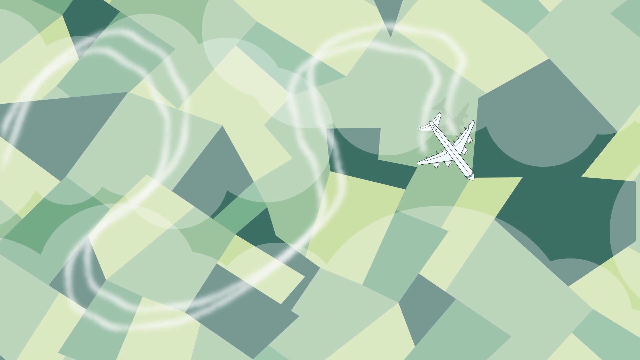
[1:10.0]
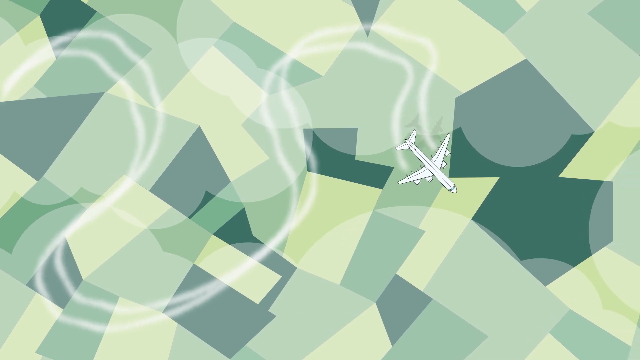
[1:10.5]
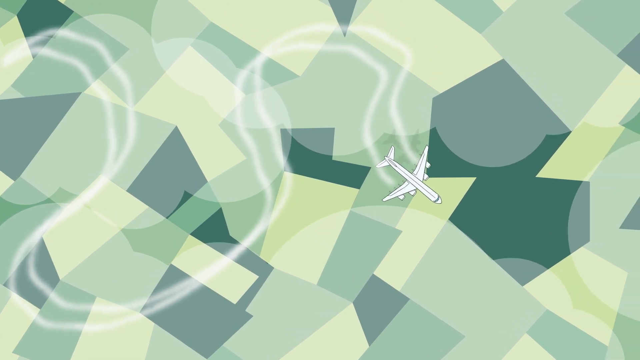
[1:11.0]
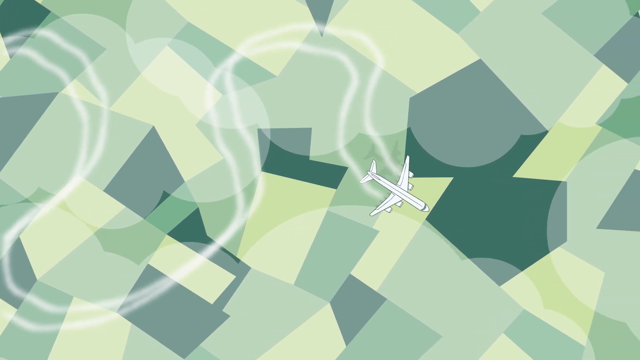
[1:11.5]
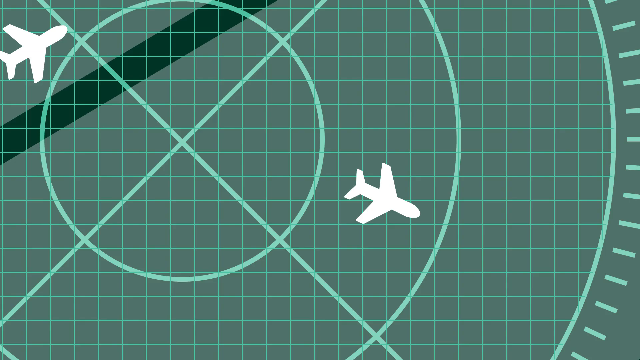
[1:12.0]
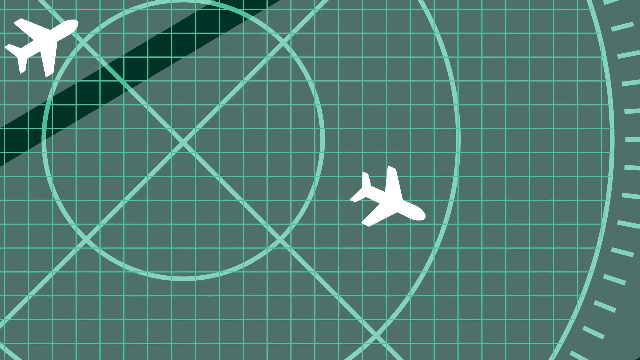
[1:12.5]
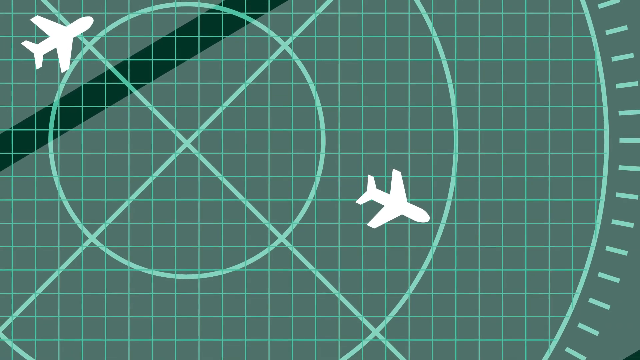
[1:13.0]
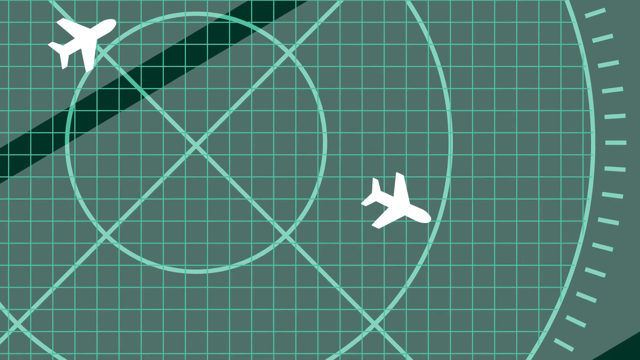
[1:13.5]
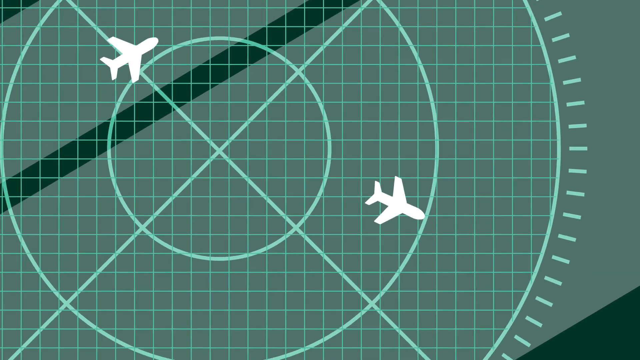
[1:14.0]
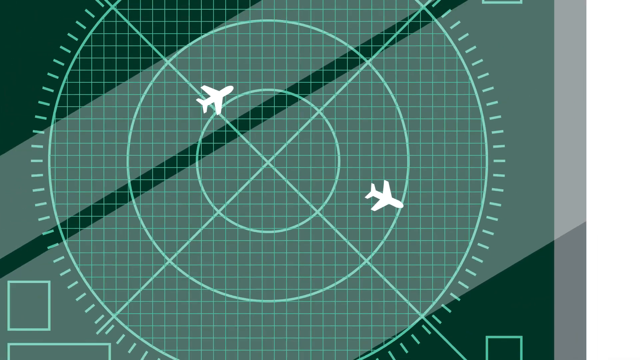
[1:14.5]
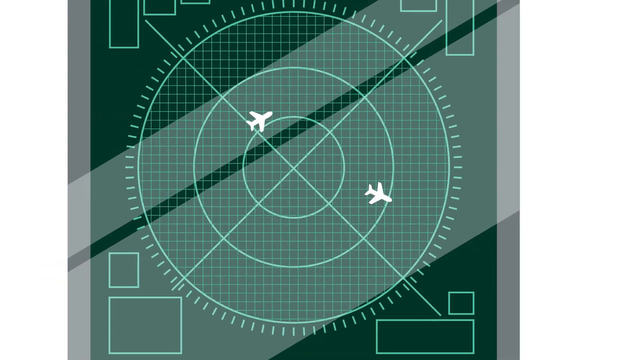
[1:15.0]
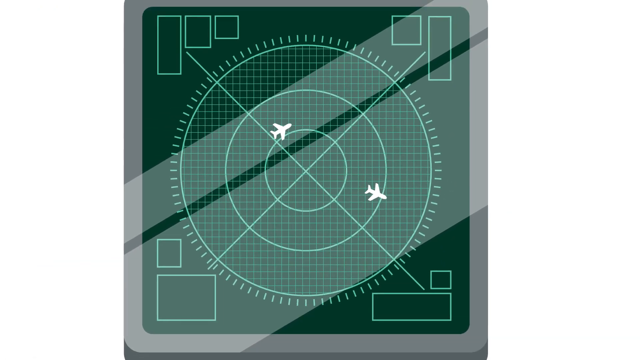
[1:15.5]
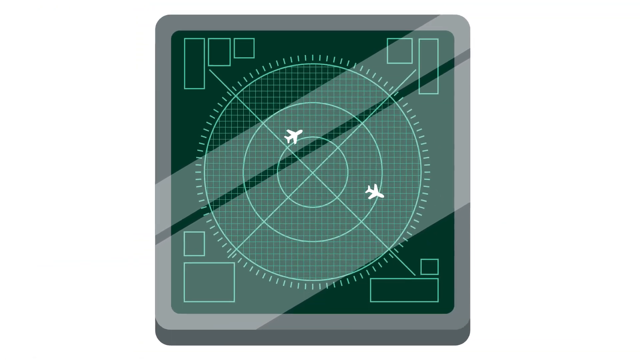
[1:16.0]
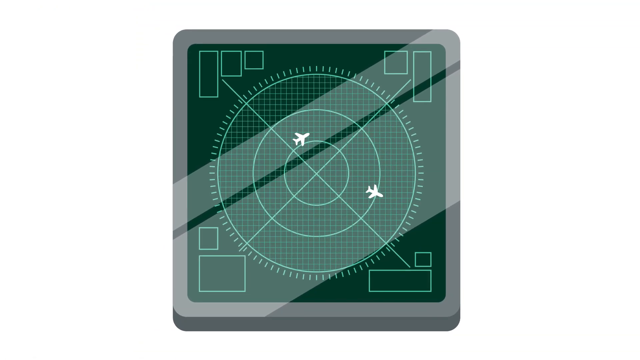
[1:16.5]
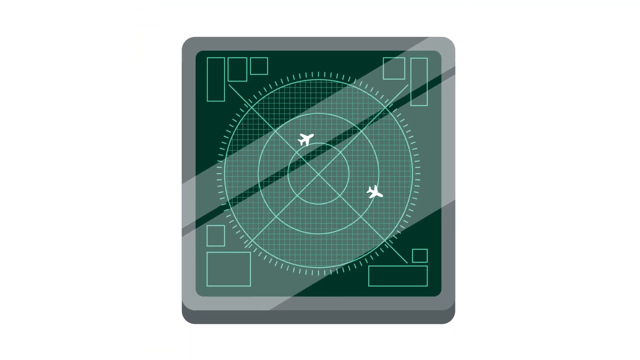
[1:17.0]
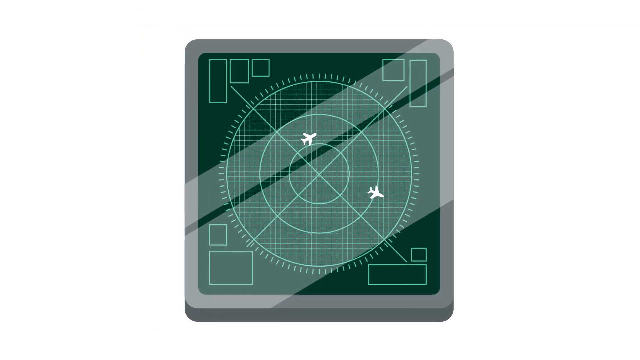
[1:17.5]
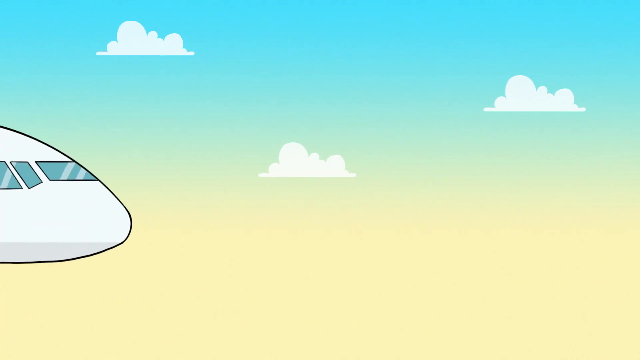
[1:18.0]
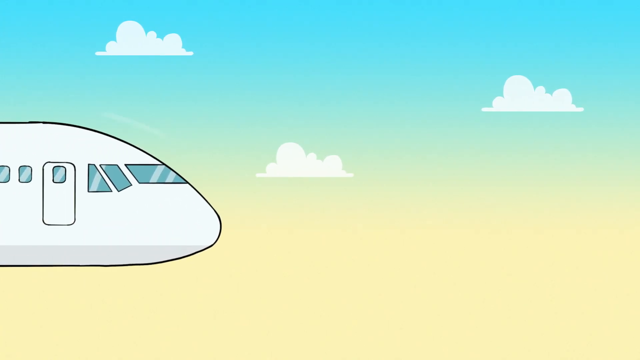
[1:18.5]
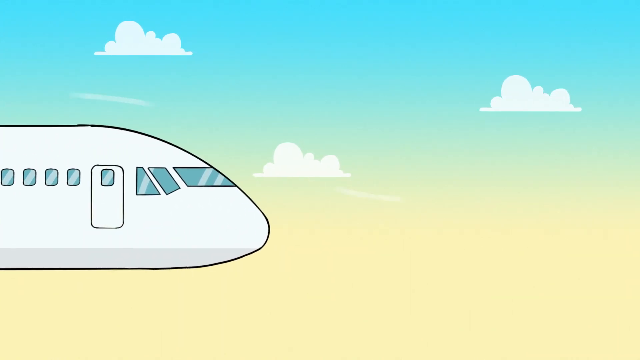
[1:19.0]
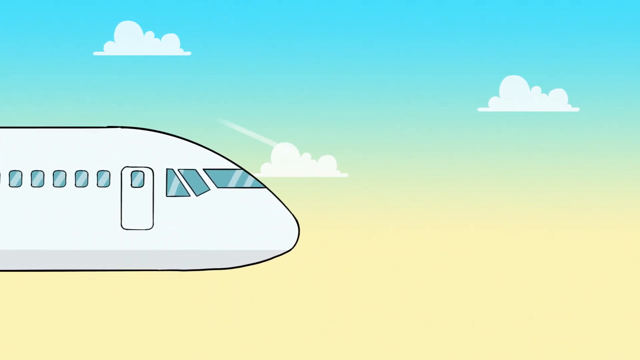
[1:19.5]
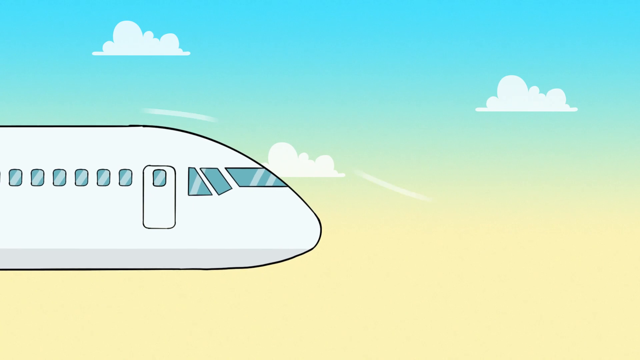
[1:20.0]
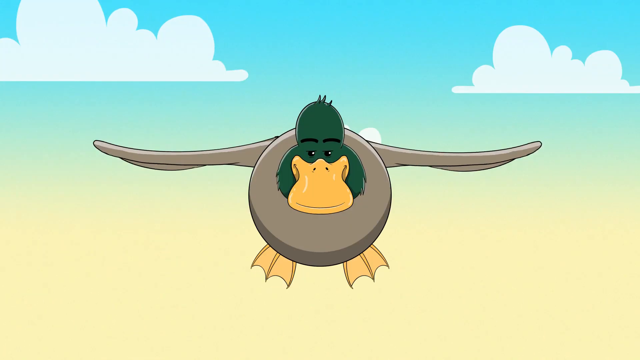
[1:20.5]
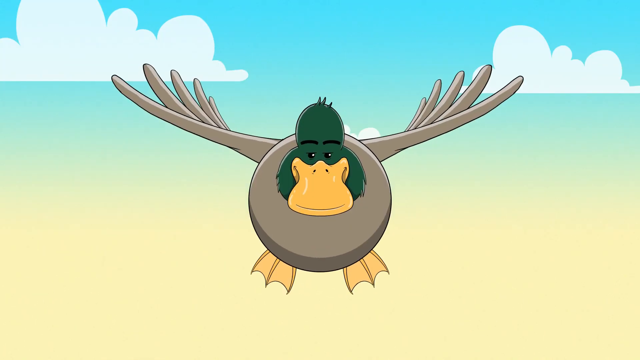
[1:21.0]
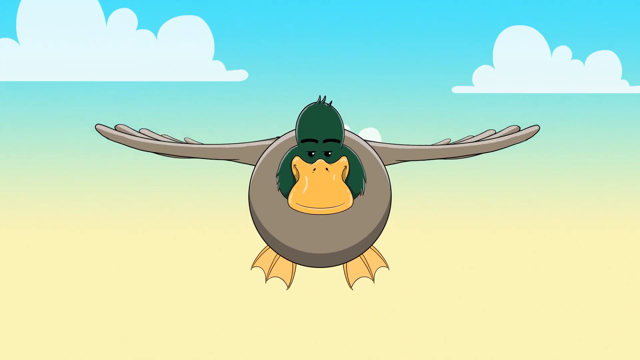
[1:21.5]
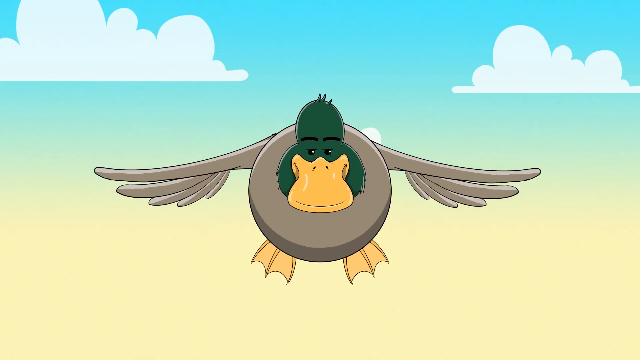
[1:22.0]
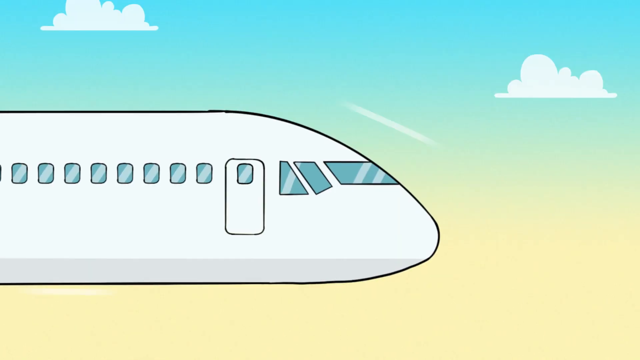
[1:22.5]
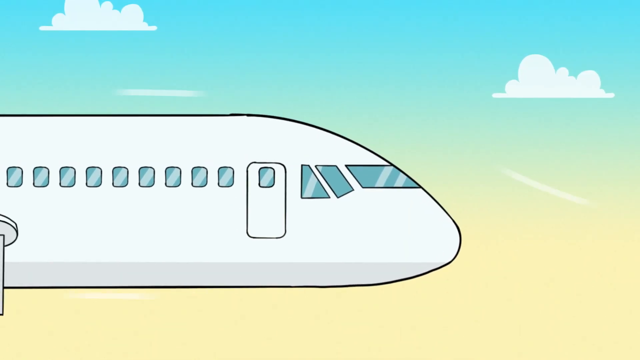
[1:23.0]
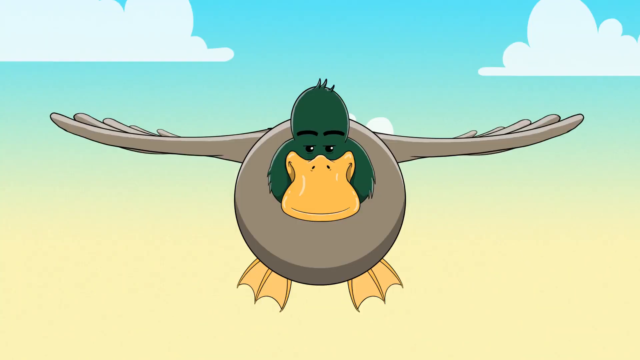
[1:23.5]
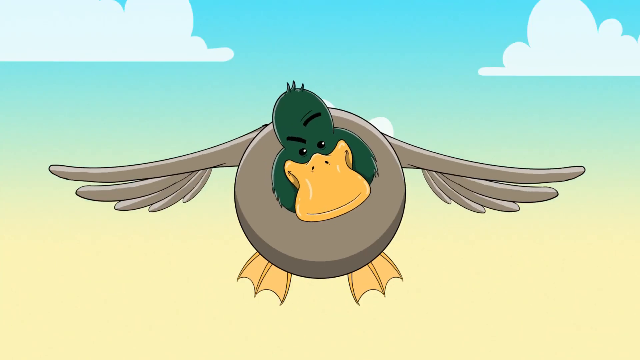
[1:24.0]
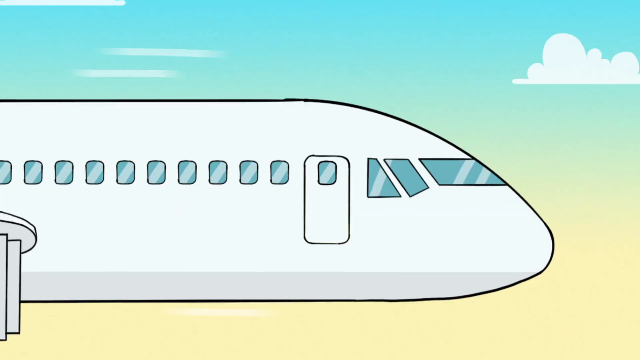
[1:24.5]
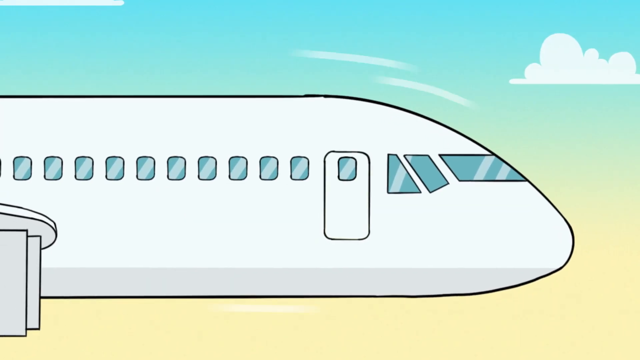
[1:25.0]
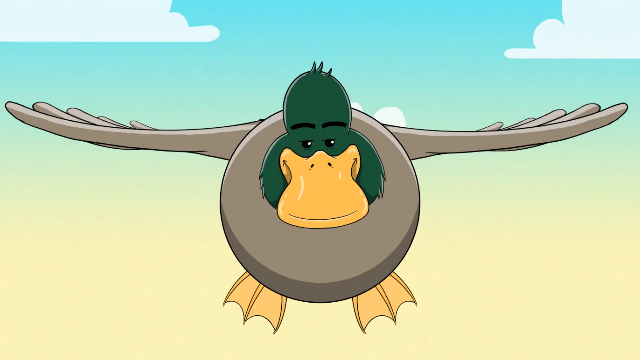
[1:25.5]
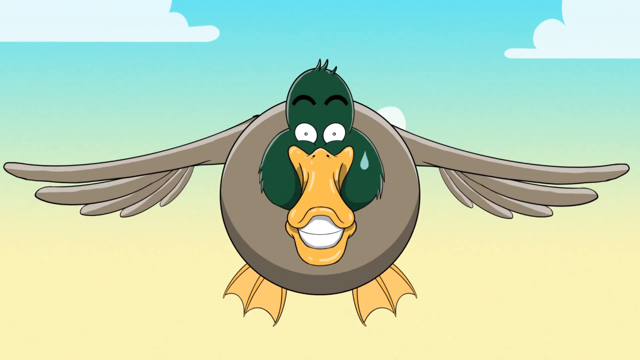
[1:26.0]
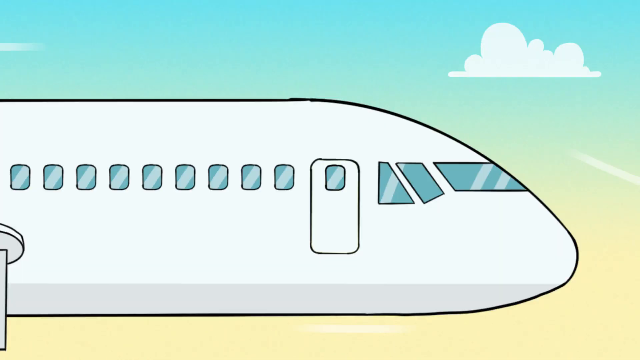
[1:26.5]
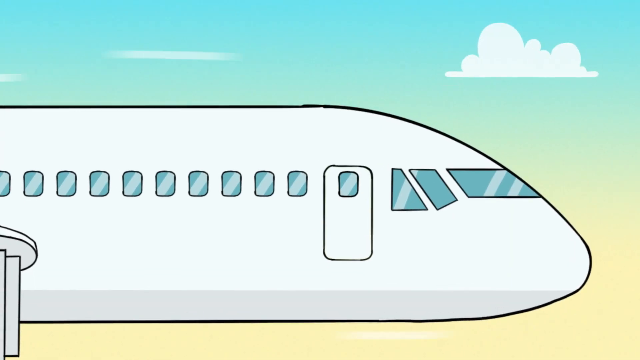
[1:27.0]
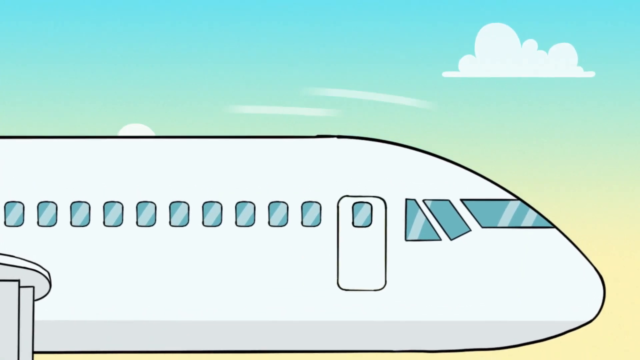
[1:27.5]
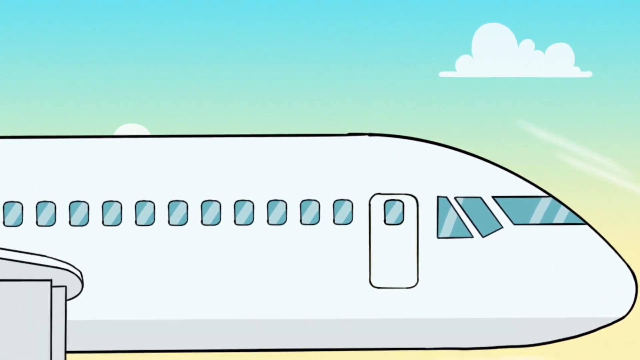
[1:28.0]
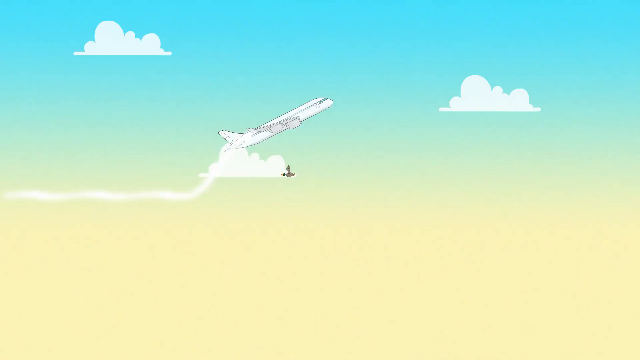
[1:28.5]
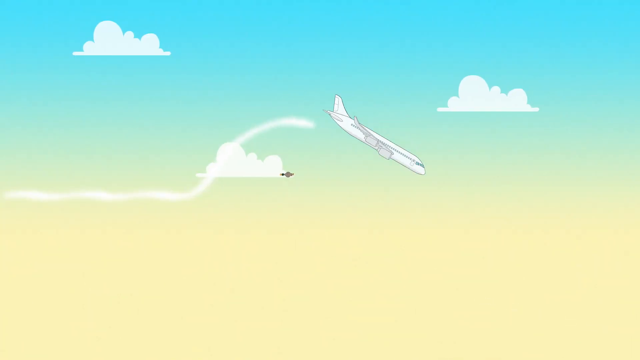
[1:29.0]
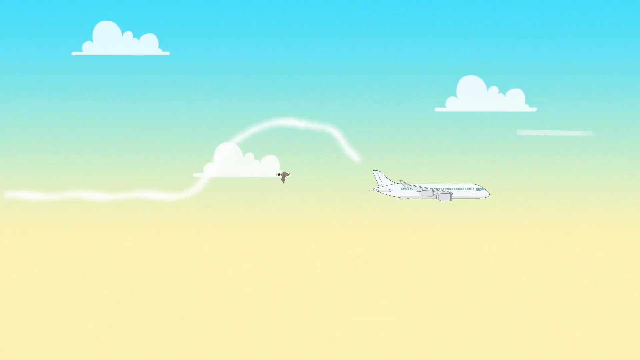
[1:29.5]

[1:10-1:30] An animated plane flies above blocky green and dark green grass, having made curves of smoke starting in the upper left that look like U's and upside-down U's; the plane is to the right of the center of the screen. The screen changes to an animated radar with an X at its center, two rings around the X, and a grid. In the lower right, an abstract drawing of a plane heads toward the lower right, and then a plane flies from the upper left to the upper right of the screen. The camera zooms backward to show the whole radar on a square-shaped object with a gray border on a white background. A different shot shows the nose of a plane from the right side, including the door to the left of the cockpit, flying against a sky that is blue at the top and yellow at the bottom with three small clouds, as white wind particles flow over the nose. A close-up shows a duck from the front, with yellow webbed feet, a yellow beak, brown body and feathers, and a green head that is slightly flapping. The side of the plane is shown traveling to the right, then the duck again, now with its head turned slightly to the right and looking a little puzzled. The right side of the front of the plane continues moving fast to the right. Back on the duck, it is now scared: it shows its teeth, its eyes go wide and round, and a drop of sweat is on its left cheek. The left side of the plane is shown, and the plane abruptly moves up to the upper right corner. A far-out wide shot then shows the plane curving over the duck, which is flying in the center of the screen.